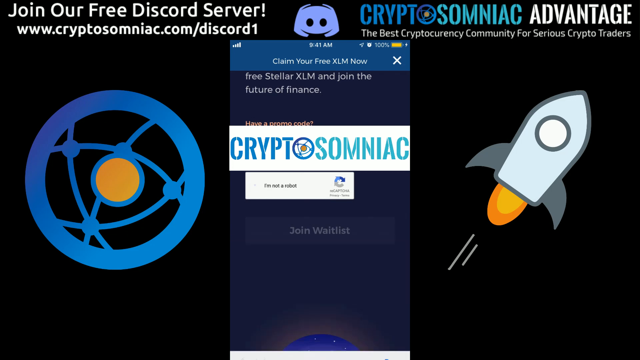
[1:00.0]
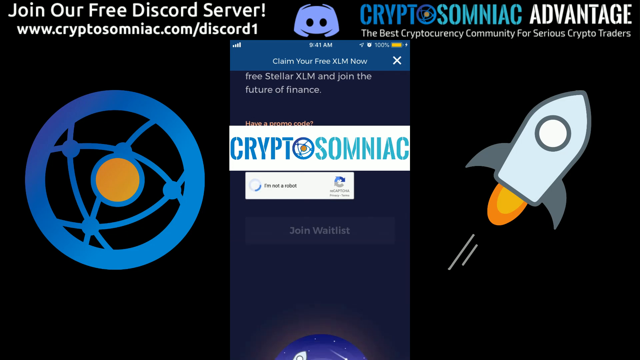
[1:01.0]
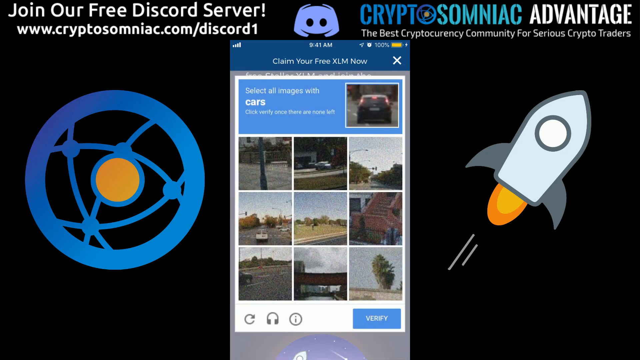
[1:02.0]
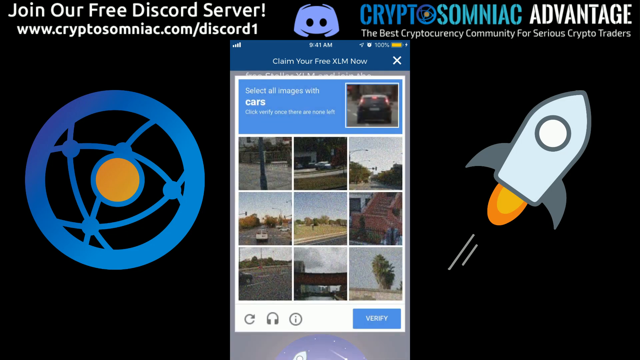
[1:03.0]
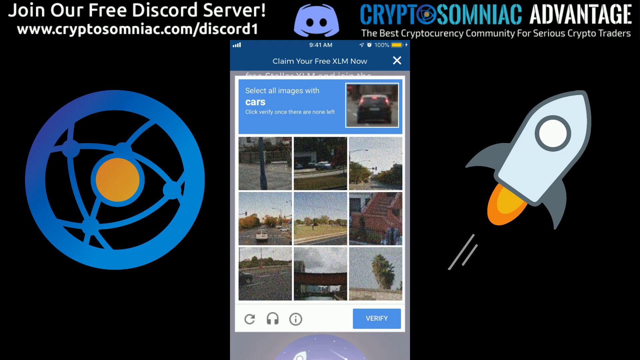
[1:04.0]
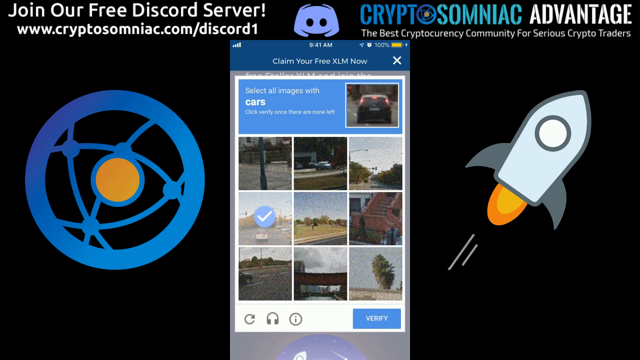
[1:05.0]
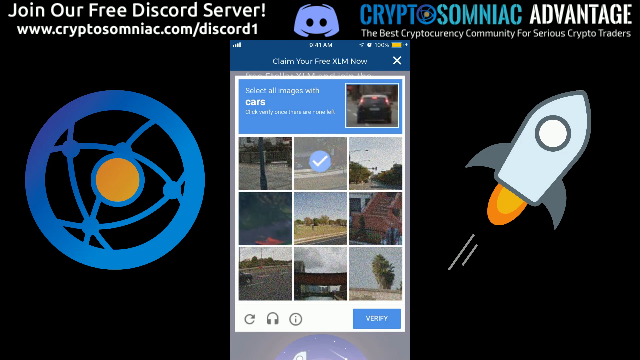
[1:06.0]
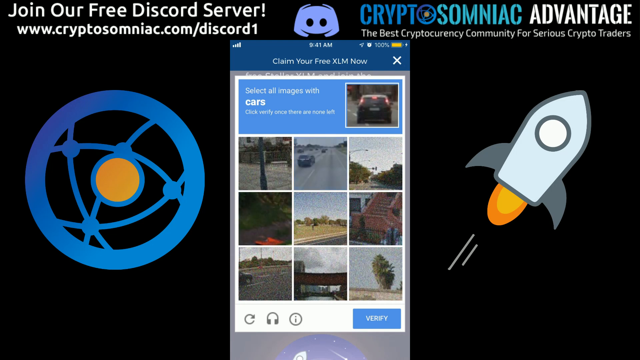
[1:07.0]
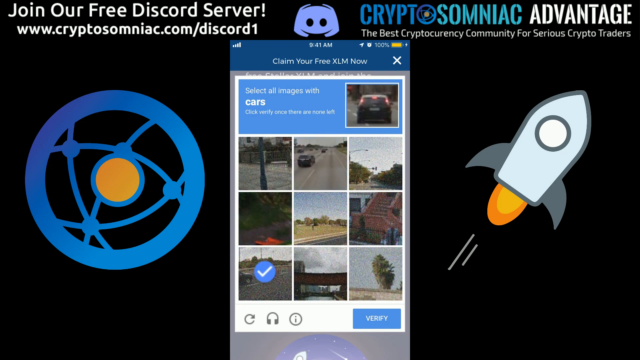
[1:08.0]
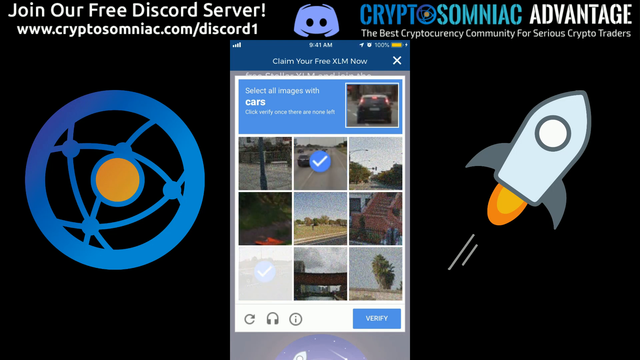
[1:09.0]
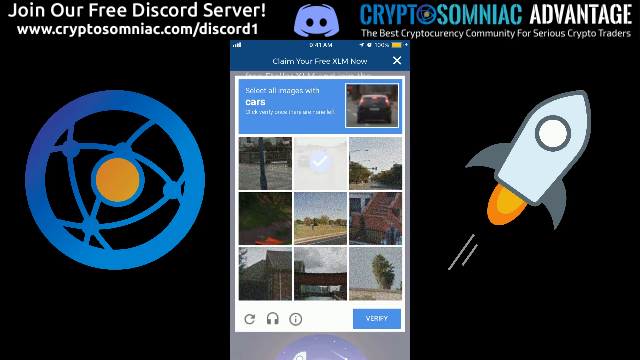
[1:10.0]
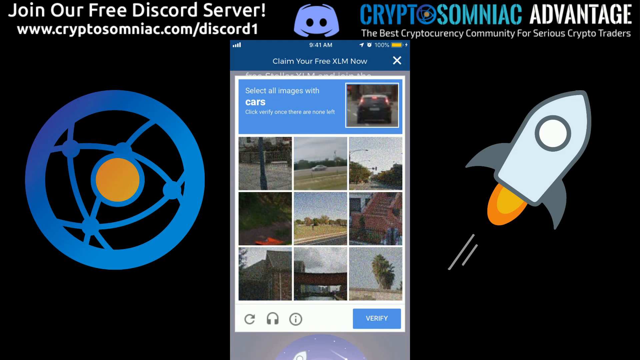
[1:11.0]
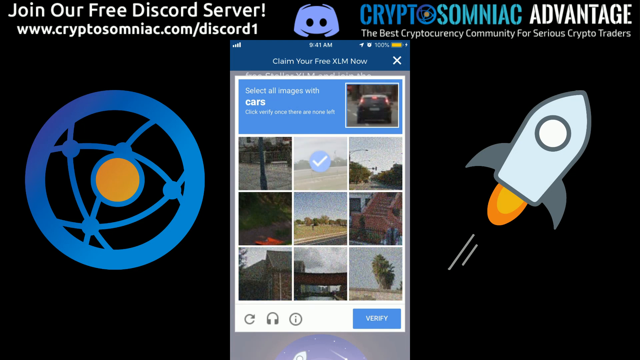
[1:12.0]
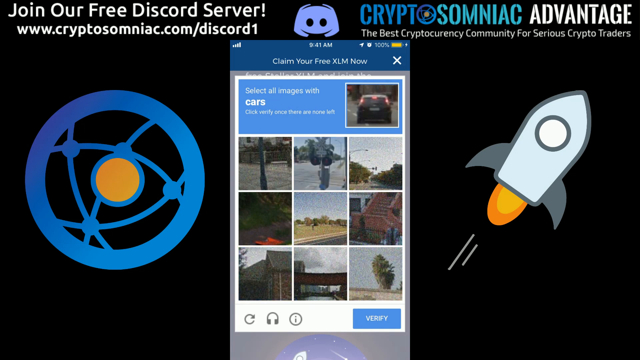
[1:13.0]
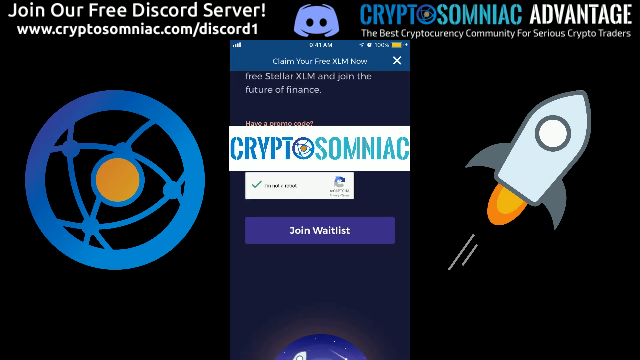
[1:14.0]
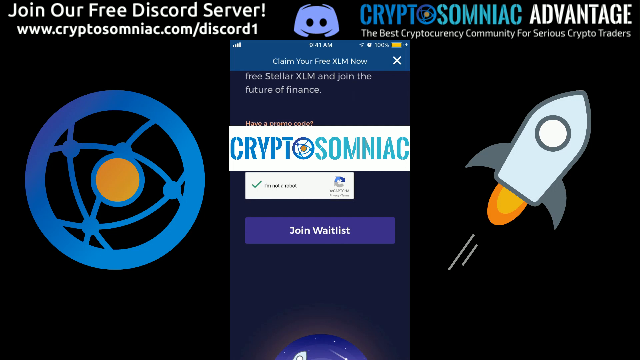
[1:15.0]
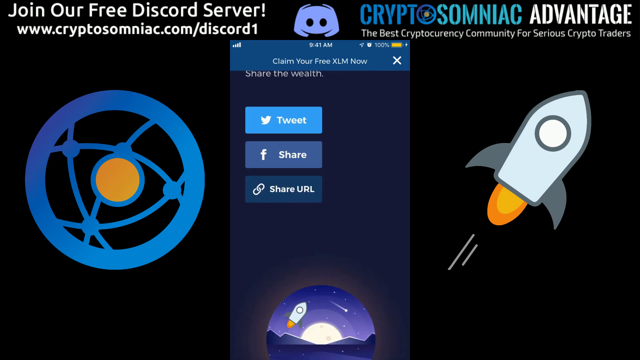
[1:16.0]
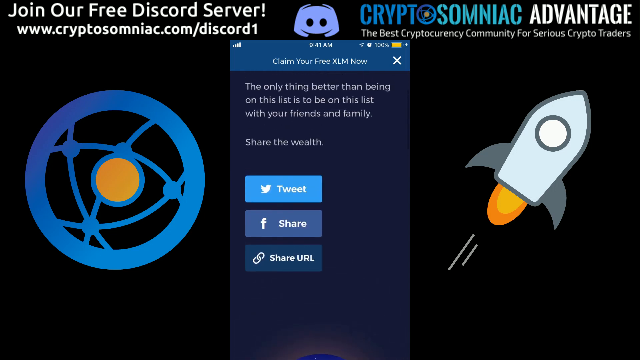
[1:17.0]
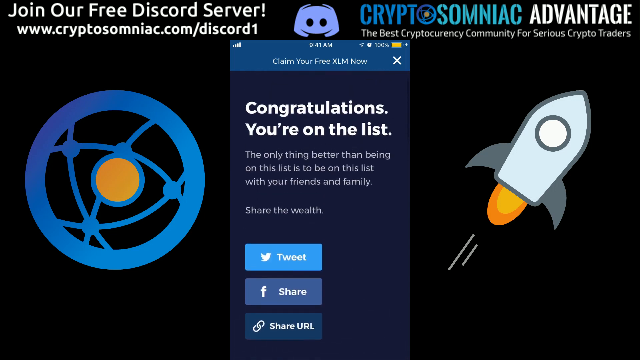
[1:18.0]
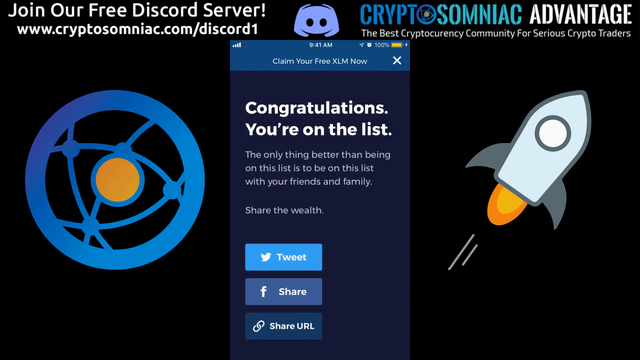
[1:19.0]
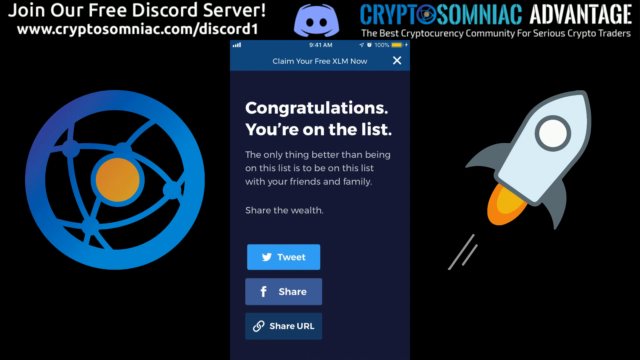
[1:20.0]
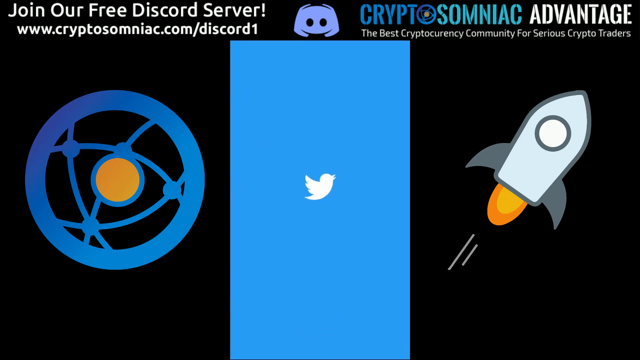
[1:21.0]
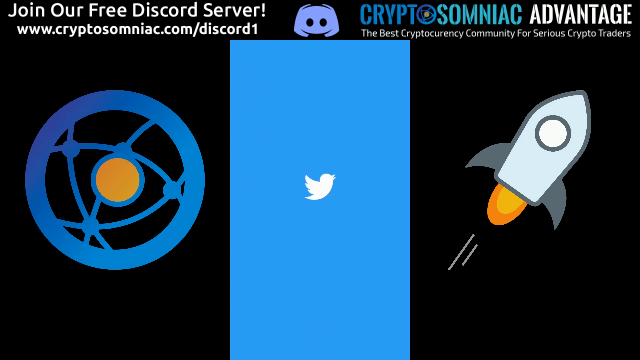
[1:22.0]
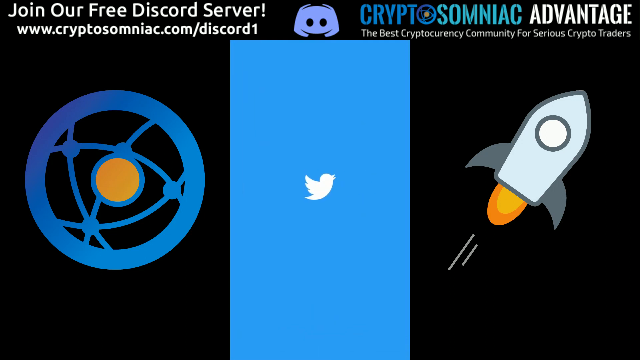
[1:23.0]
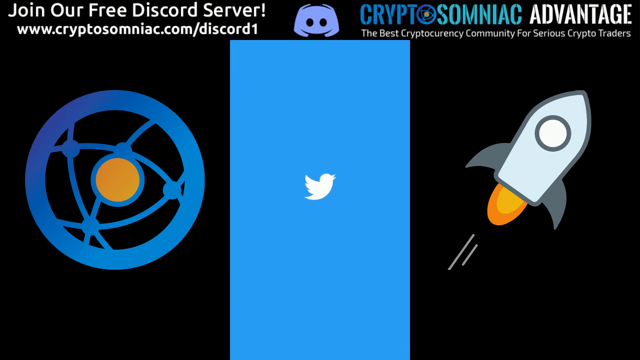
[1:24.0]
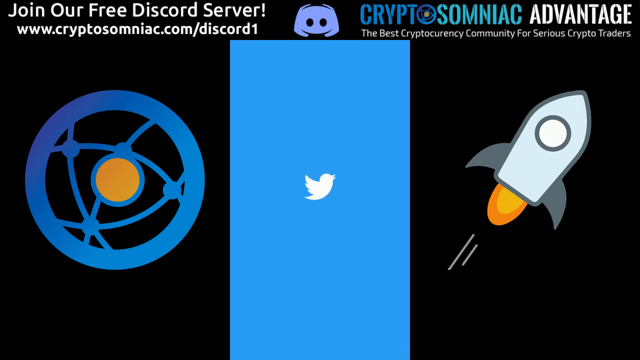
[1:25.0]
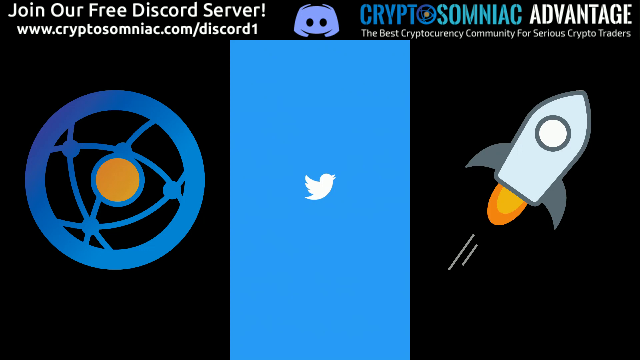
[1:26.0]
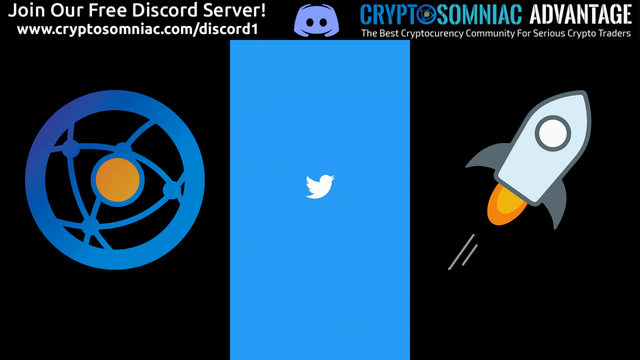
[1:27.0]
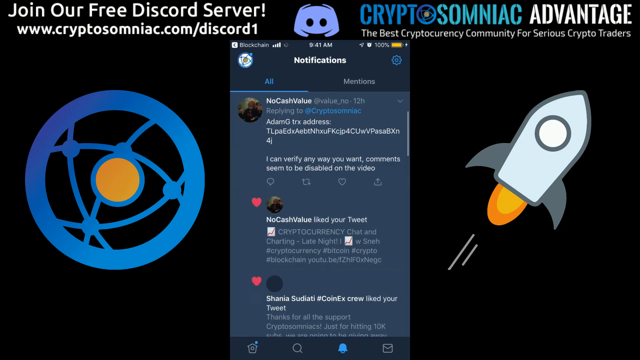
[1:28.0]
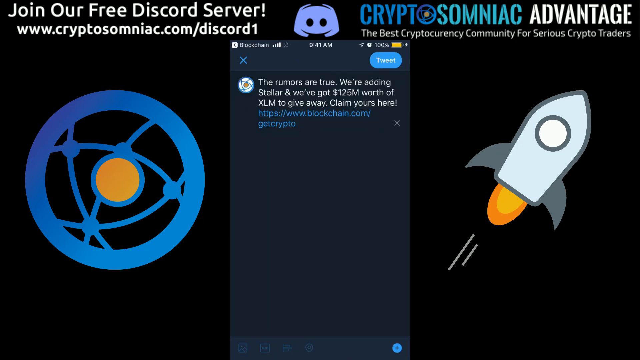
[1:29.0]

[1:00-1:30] The screen with "join our free Discord server" from CryptoSomniac Advantage remains. The O logo is still on the left, the menu in the middle is now a CAPTCHA, and the rocket ship is still on the right. The CAPTCHA asks to pick the cars for verification and authentication. It then moves to a screen that says "join our waitlist," which offers share buttons for Twitter, Facebook, and copying the URL. Next it jumps to a blue background showing Twitter, with Twitter feeds talking about Cryptosomniac.